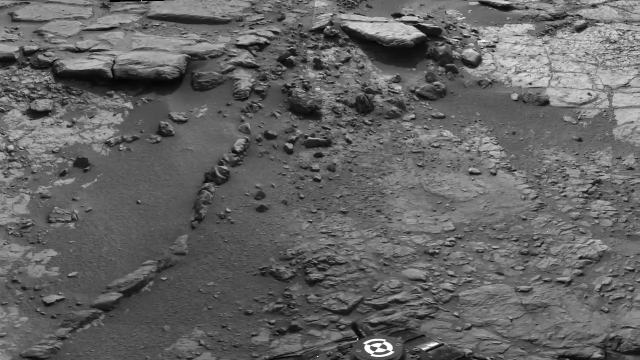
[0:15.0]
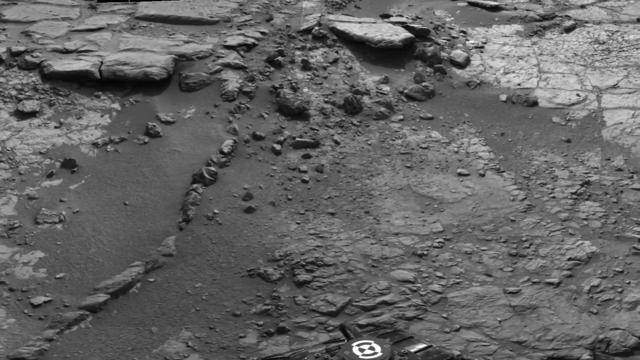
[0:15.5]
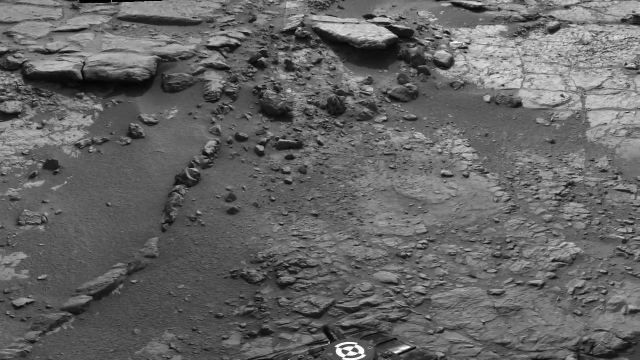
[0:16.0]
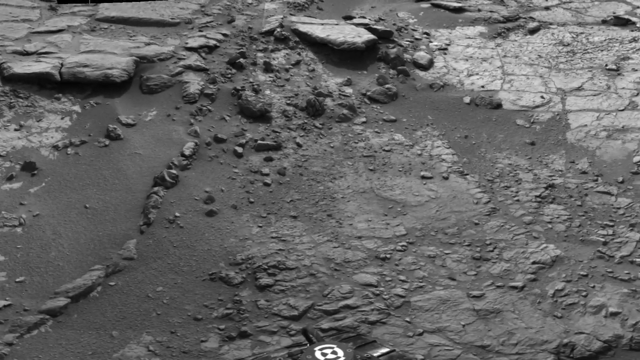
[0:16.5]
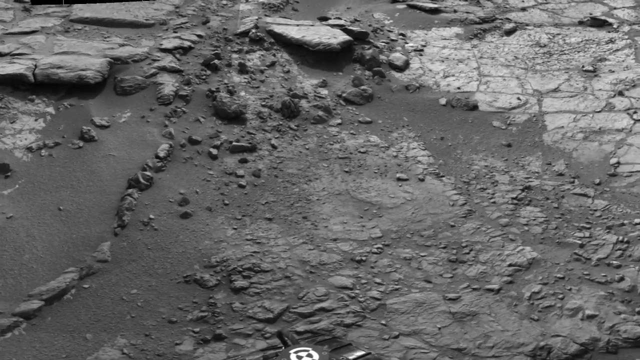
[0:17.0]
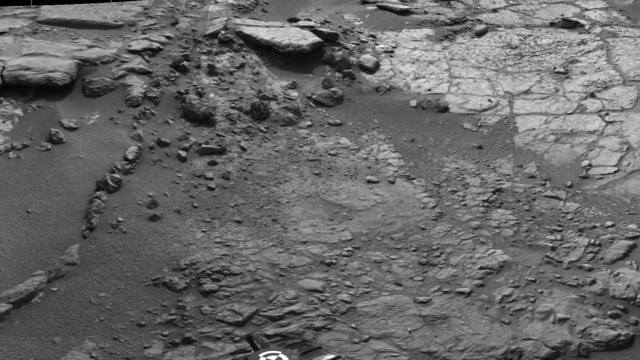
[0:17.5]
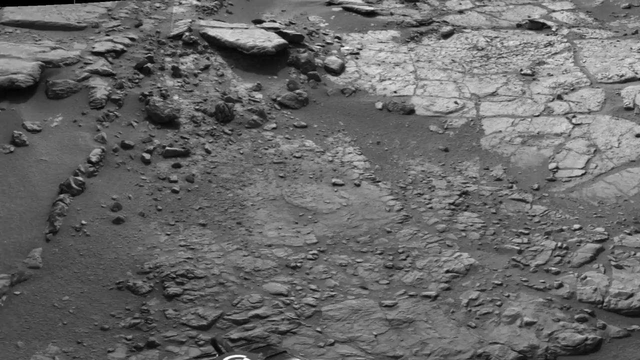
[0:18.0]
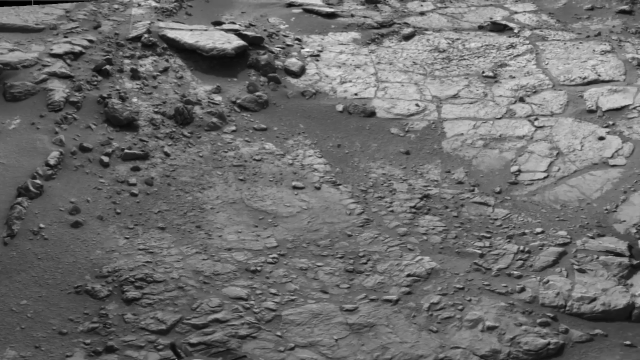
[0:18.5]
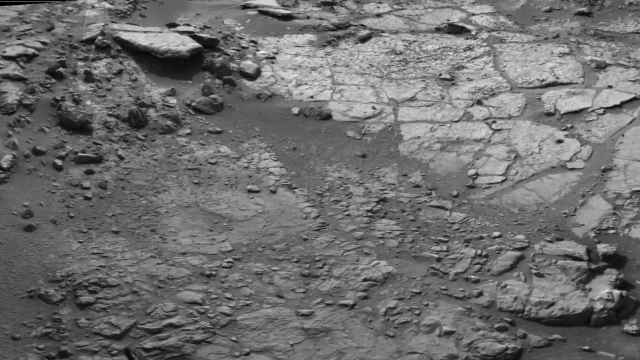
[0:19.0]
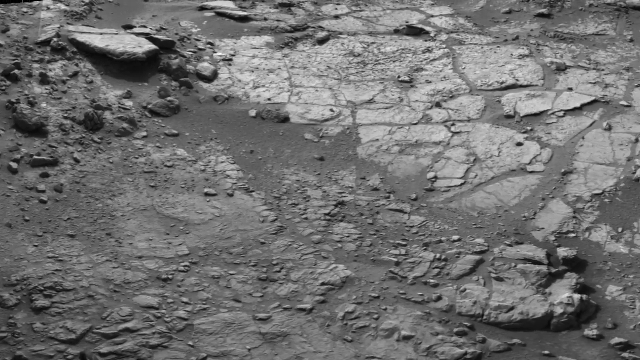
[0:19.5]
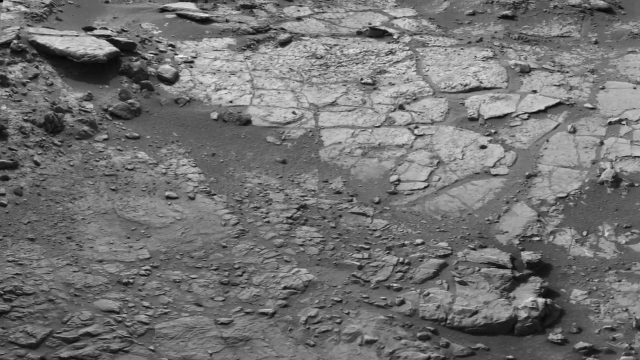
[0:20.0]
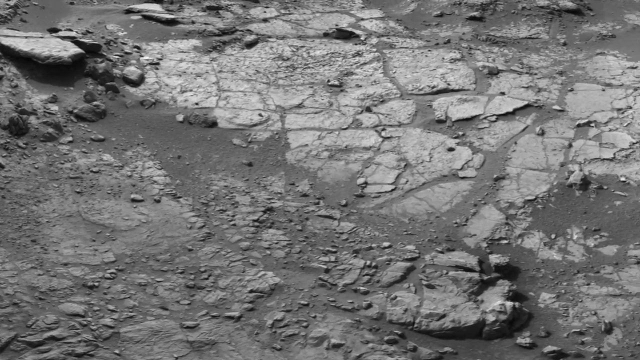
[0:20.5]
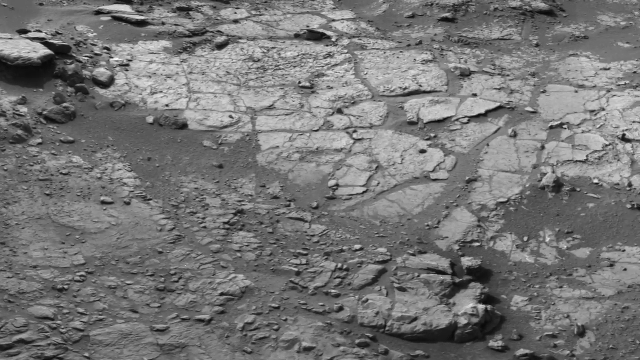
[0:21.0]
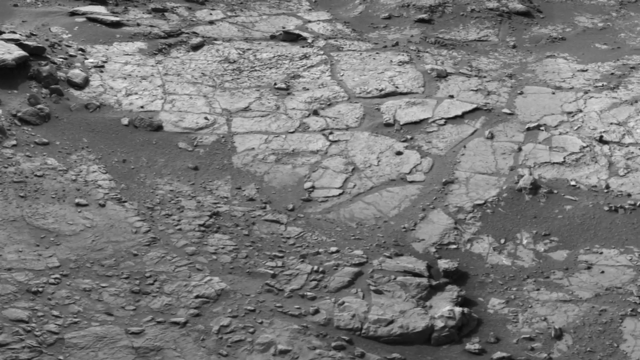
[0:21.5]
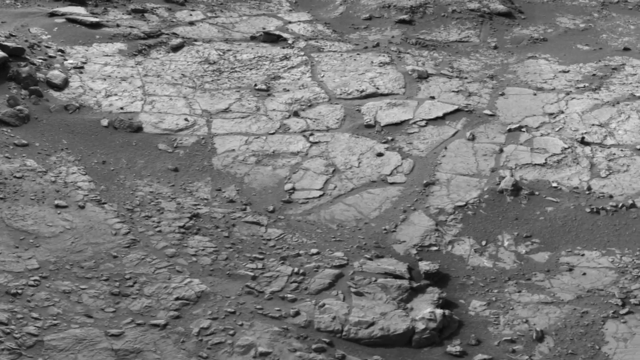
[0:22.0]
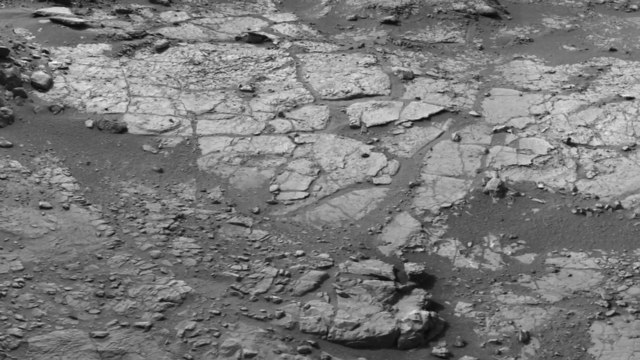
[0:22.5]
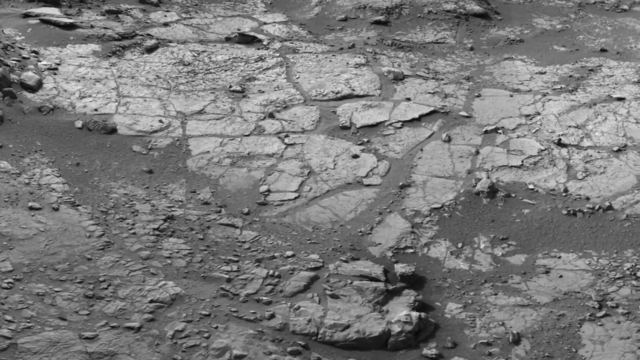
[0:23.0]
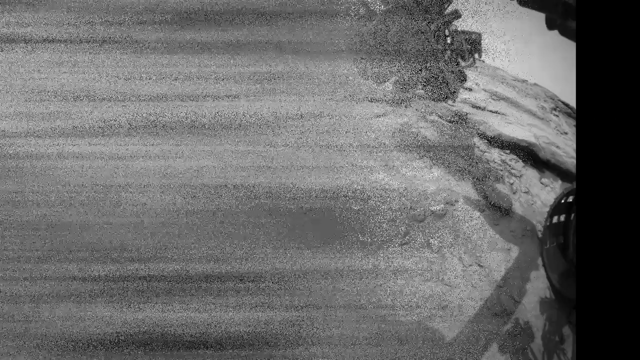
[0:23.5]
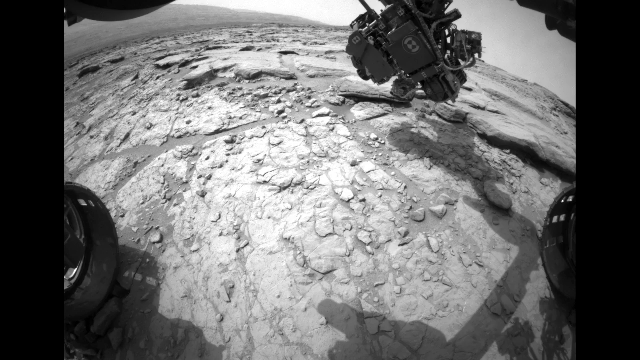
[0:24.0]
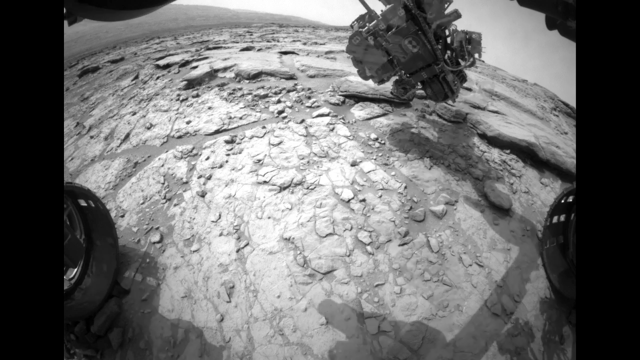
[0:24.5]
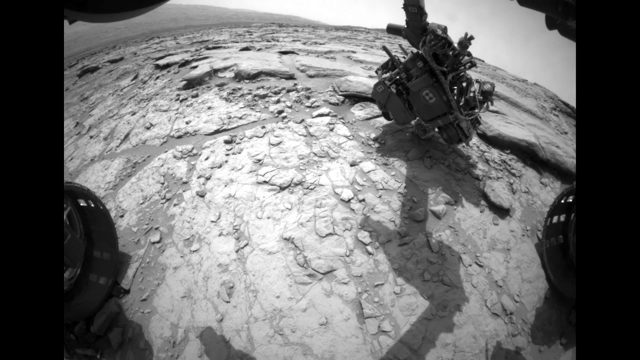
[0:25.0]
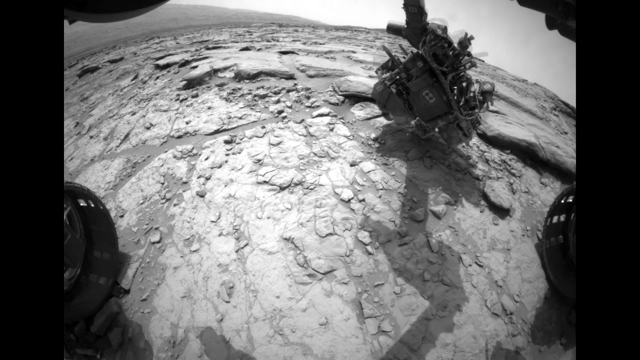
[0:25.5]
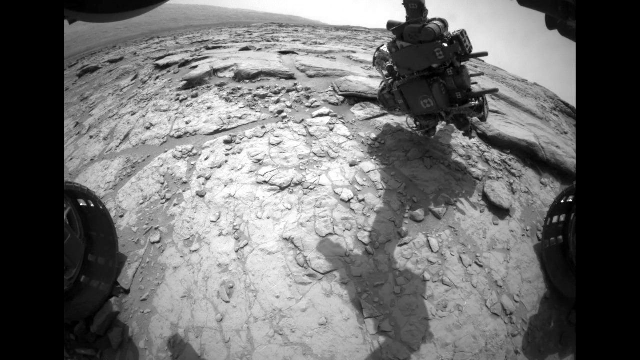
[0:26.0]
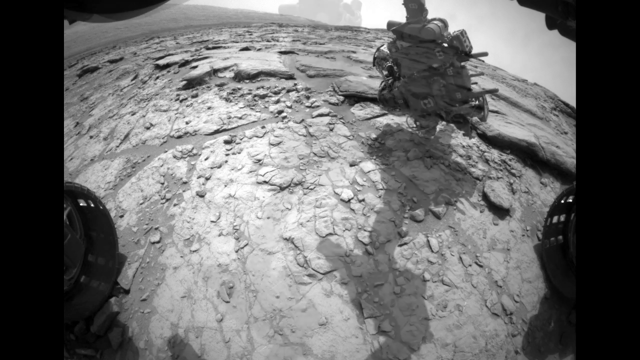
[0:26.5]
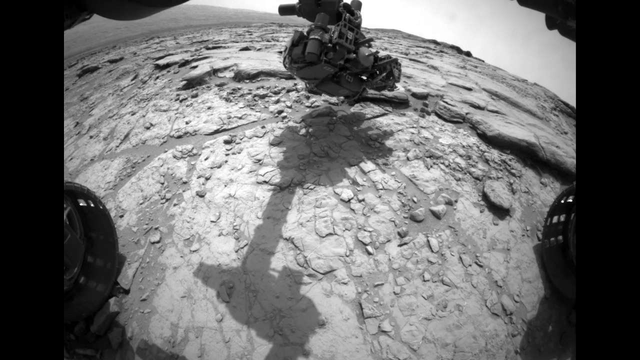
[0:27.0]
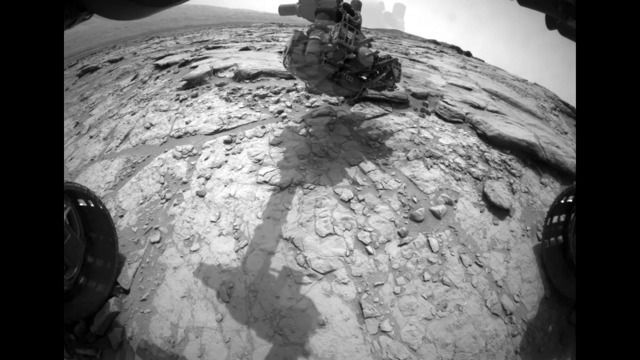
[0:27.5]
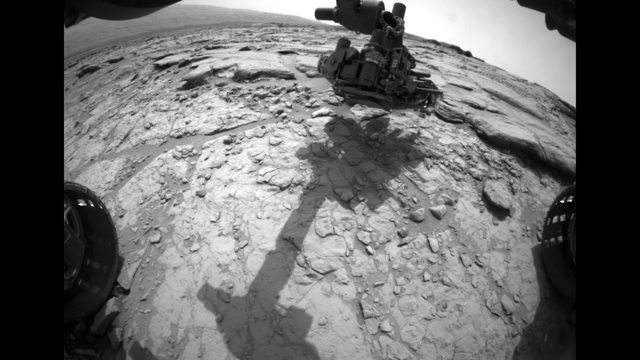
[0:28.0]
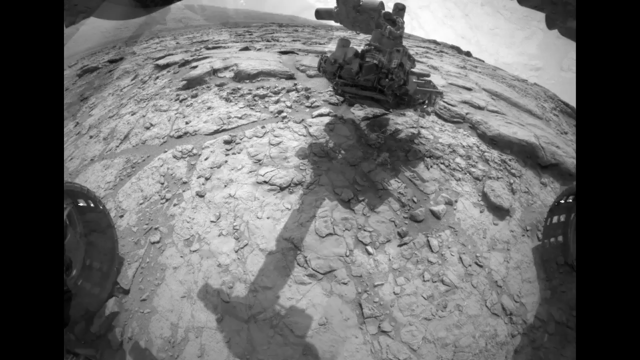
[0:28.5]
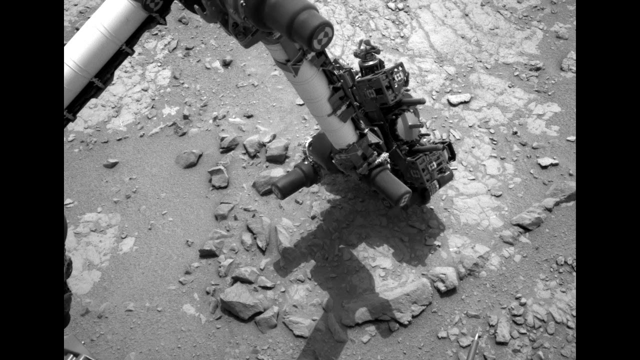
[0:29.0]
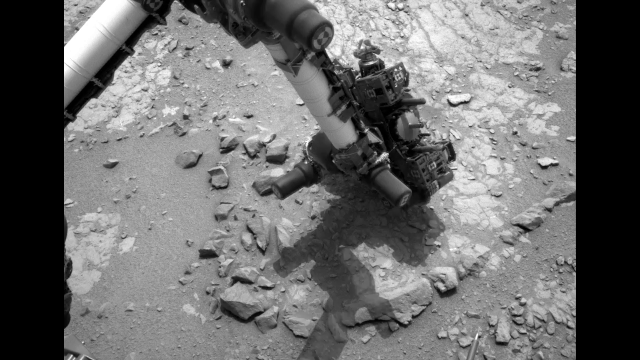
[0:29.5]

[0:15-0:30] Footage of what appears to be the Mars rover plays, with all of the images in black and white. It appears to be time-lapse photography, as some of the motions are a little jerky. One scene is a slow-motion pan across the surface of Mars that almost looks like dried mud; although there is no visible water, it looks almost wet. In some shots the rover's arm extends and moves around with some sort of piece of equipment on it, likely instrumentation for reading its surroundings in real time. In one image, the rover's wheels appear to be visible on the extreme left and right sides of the lower portion of the frame.